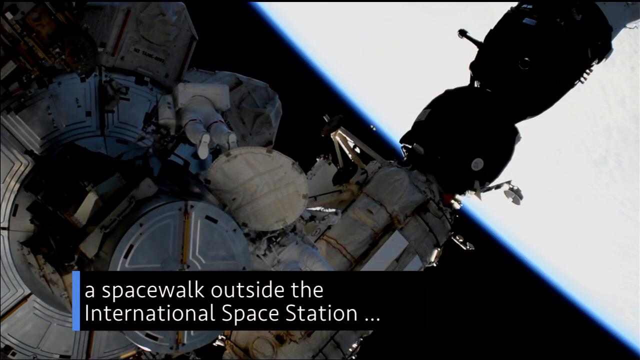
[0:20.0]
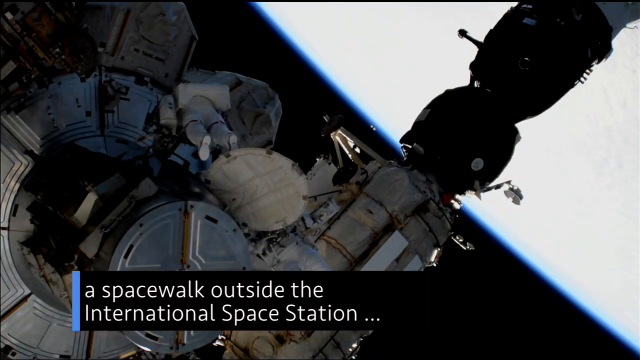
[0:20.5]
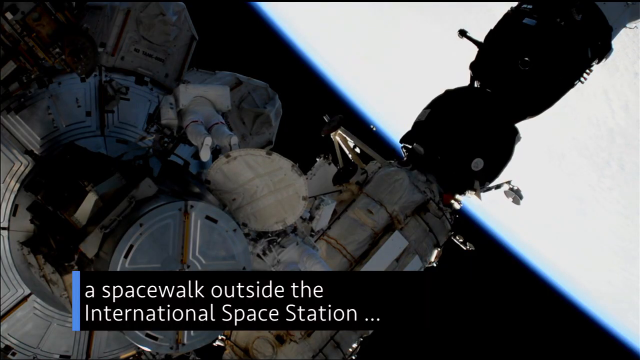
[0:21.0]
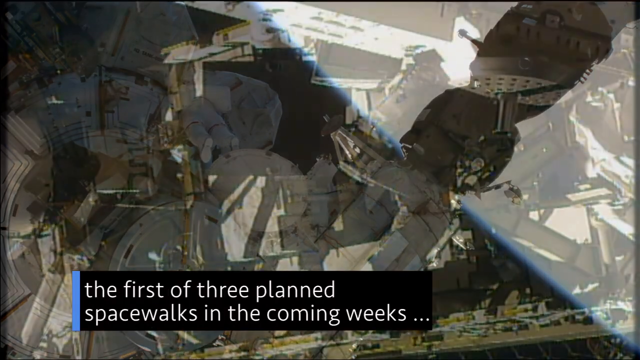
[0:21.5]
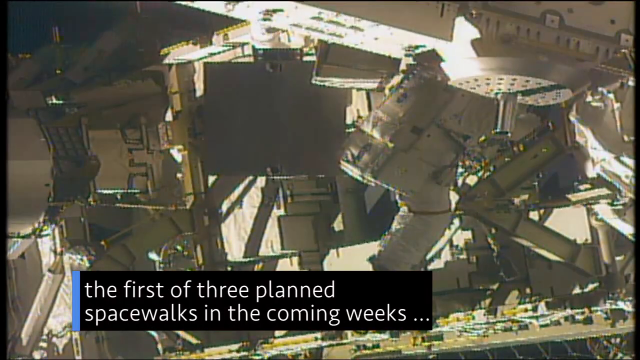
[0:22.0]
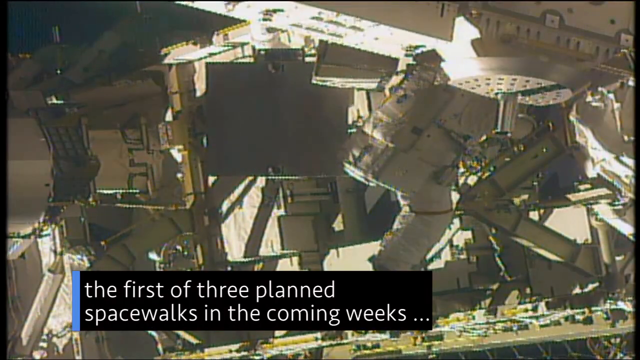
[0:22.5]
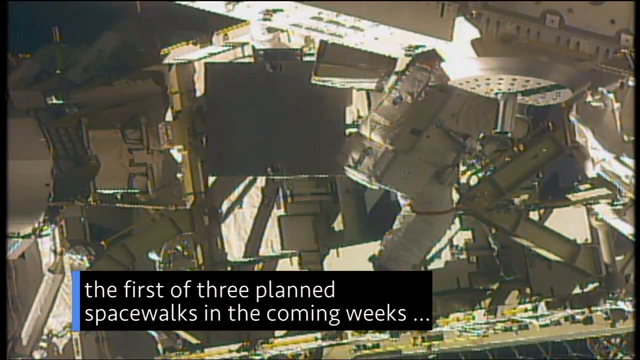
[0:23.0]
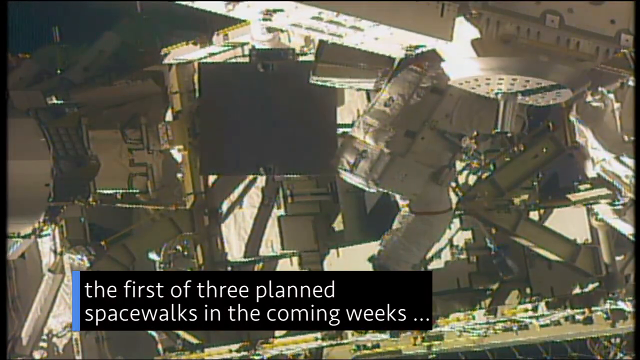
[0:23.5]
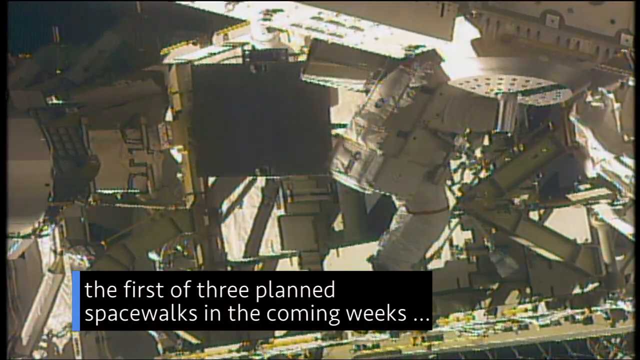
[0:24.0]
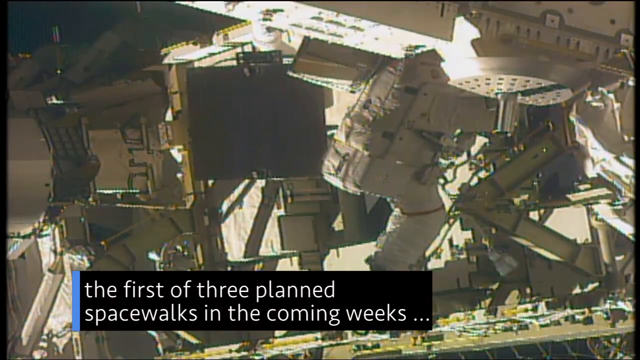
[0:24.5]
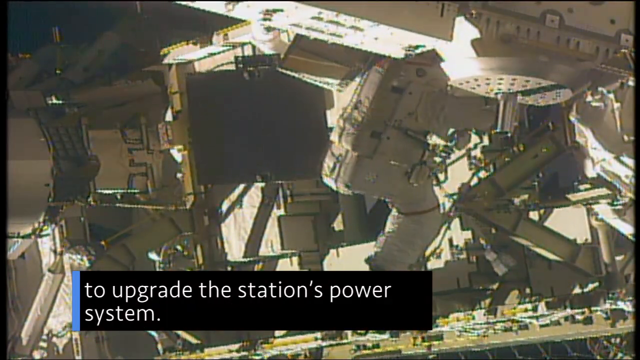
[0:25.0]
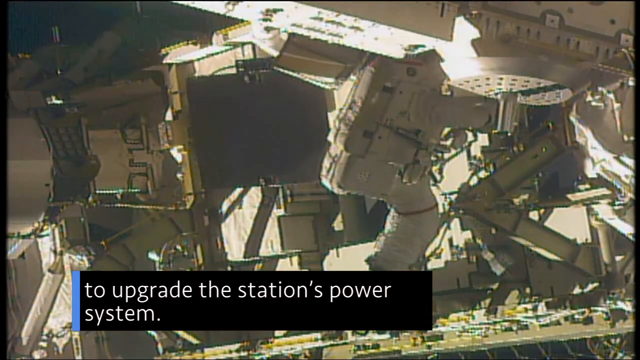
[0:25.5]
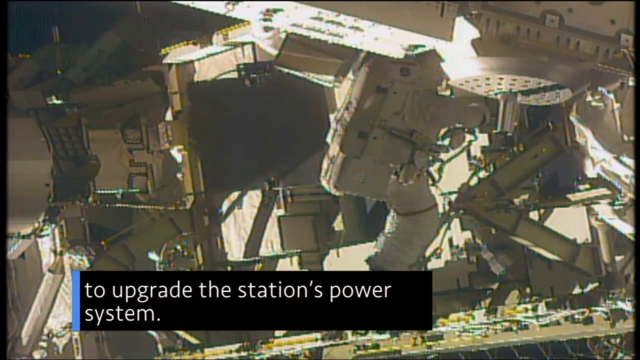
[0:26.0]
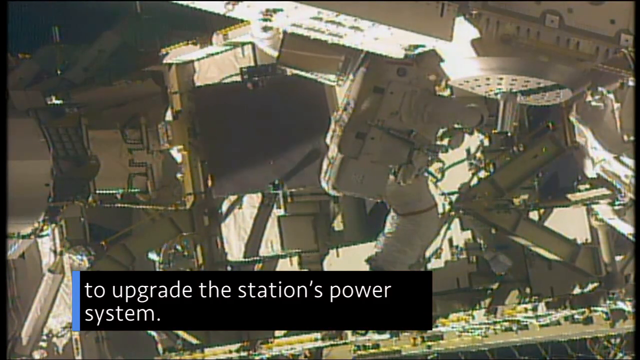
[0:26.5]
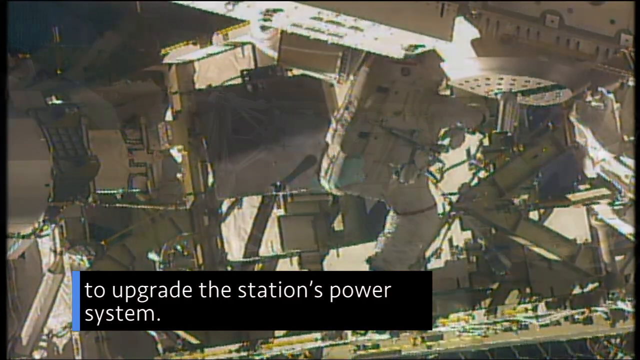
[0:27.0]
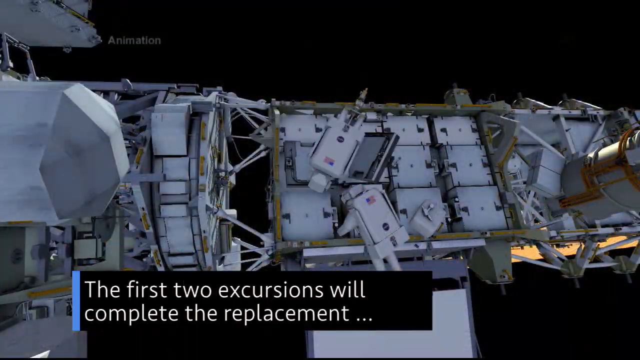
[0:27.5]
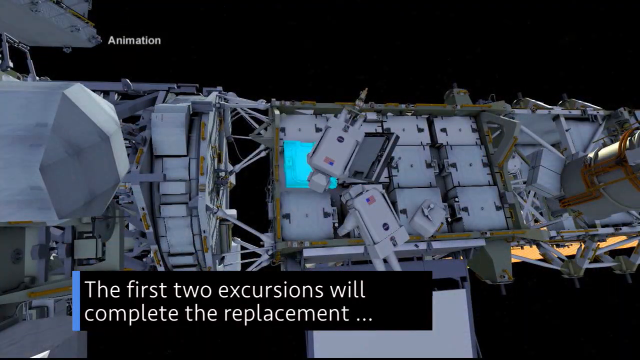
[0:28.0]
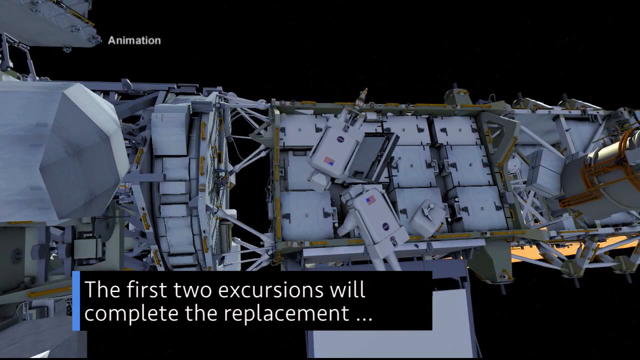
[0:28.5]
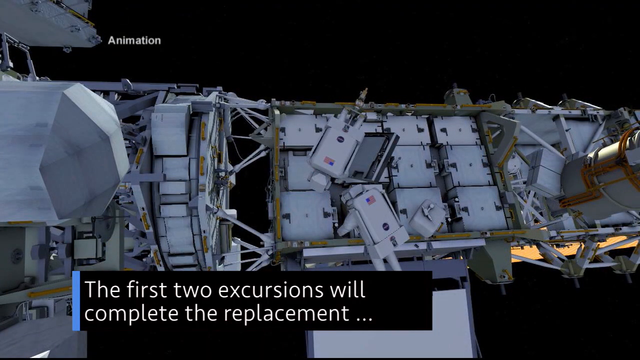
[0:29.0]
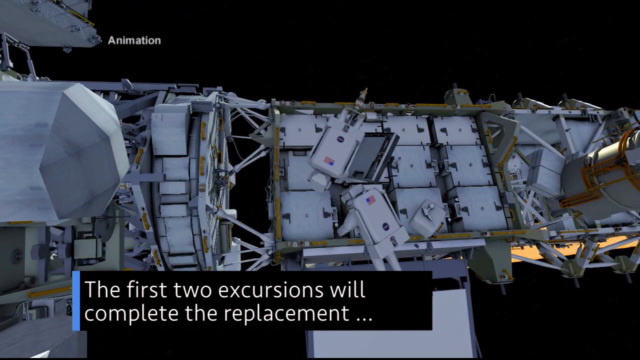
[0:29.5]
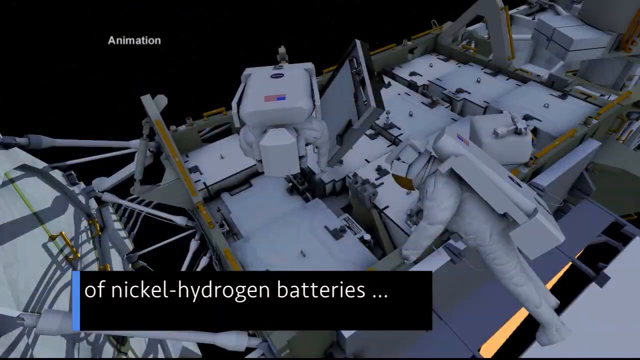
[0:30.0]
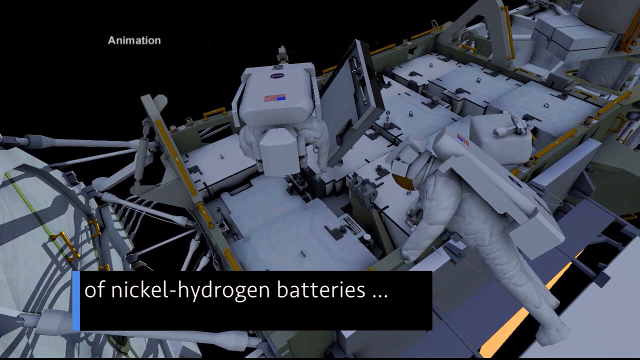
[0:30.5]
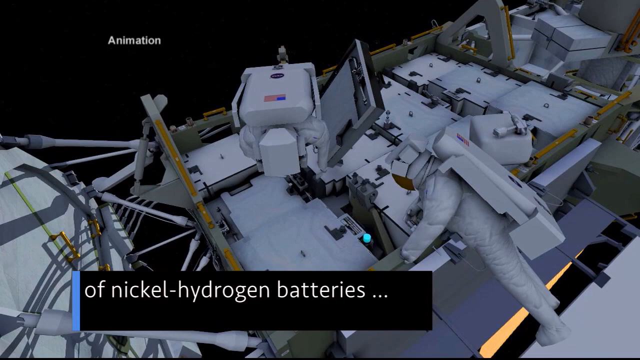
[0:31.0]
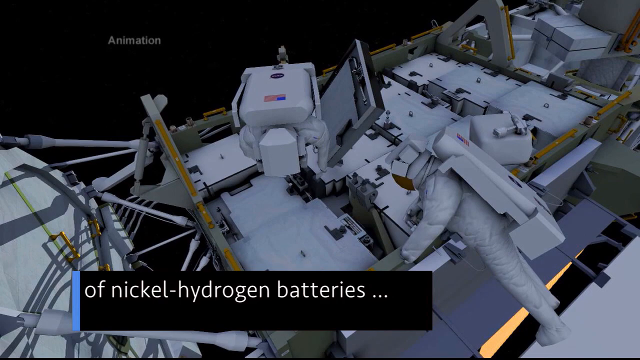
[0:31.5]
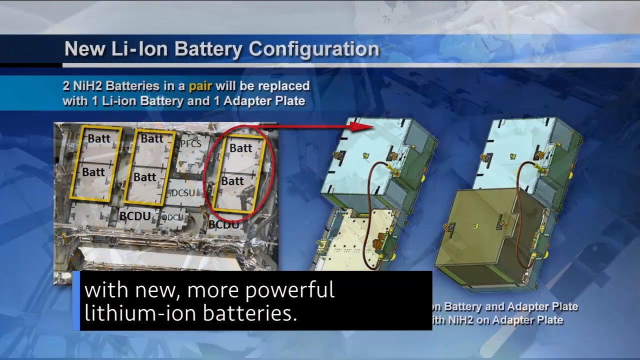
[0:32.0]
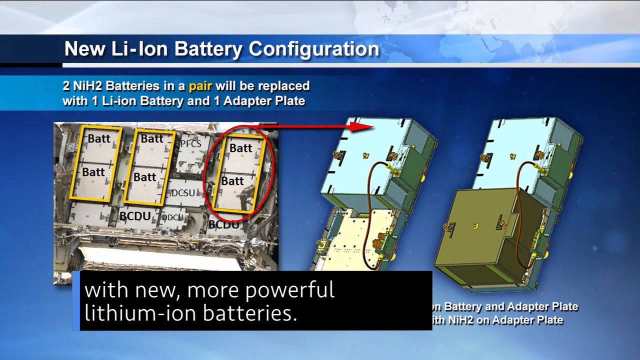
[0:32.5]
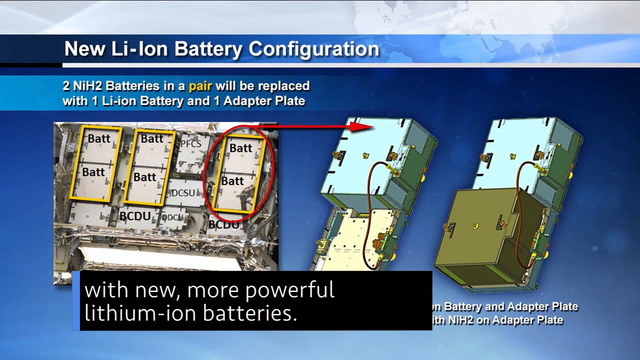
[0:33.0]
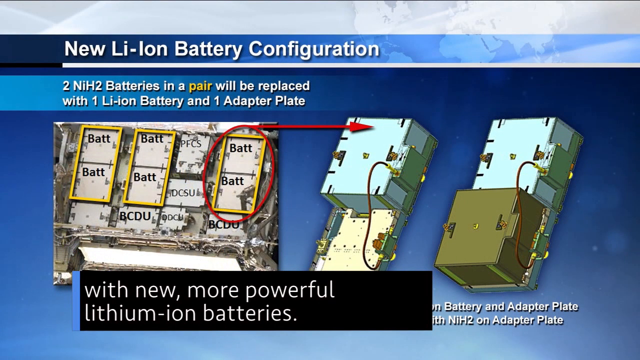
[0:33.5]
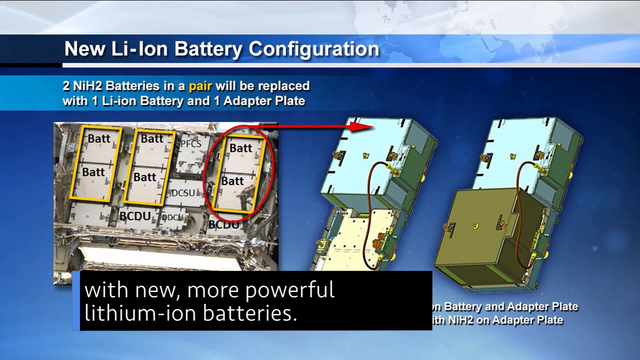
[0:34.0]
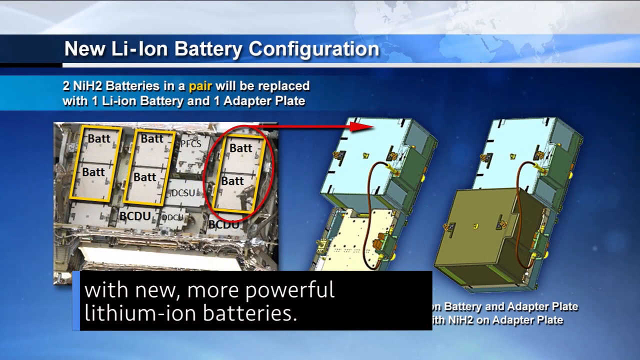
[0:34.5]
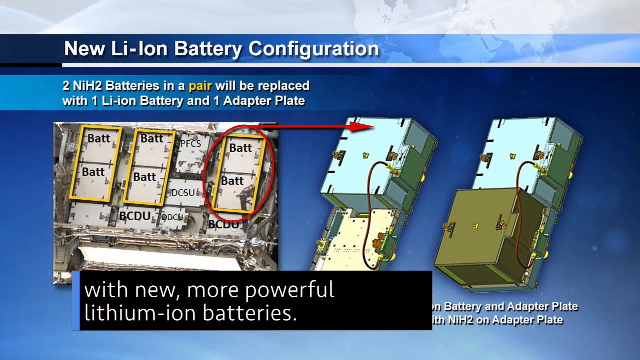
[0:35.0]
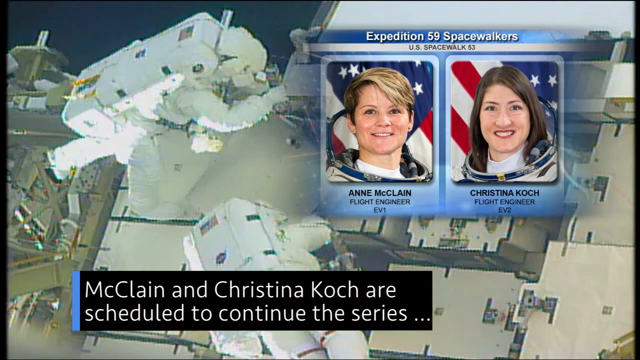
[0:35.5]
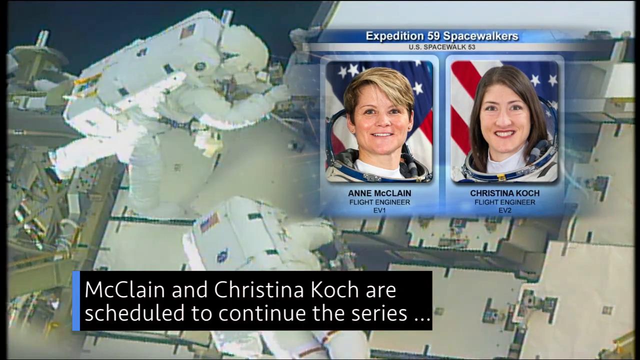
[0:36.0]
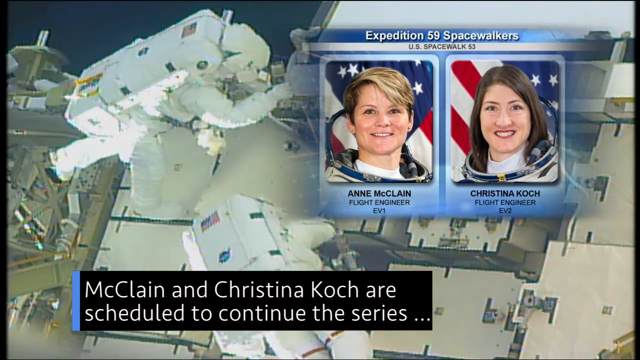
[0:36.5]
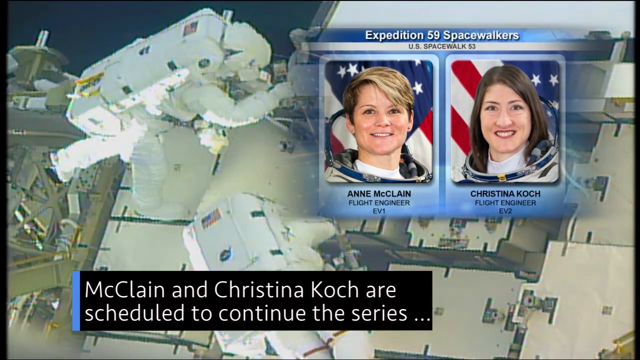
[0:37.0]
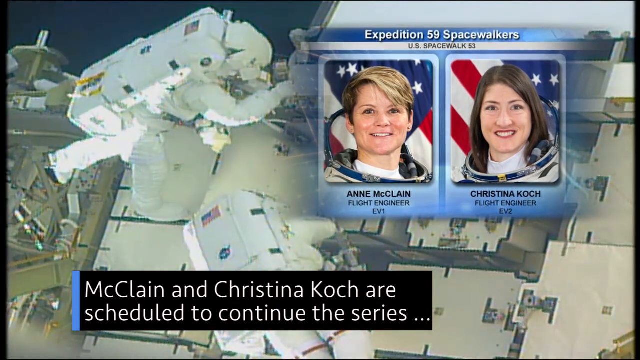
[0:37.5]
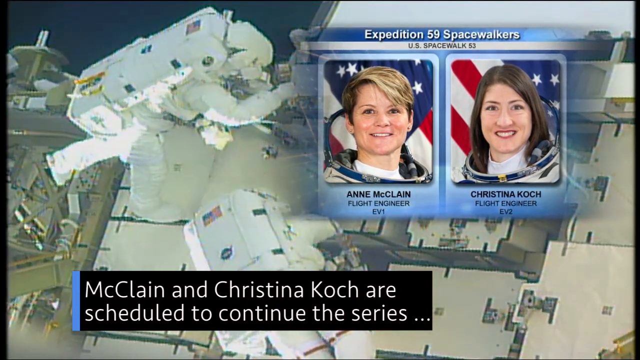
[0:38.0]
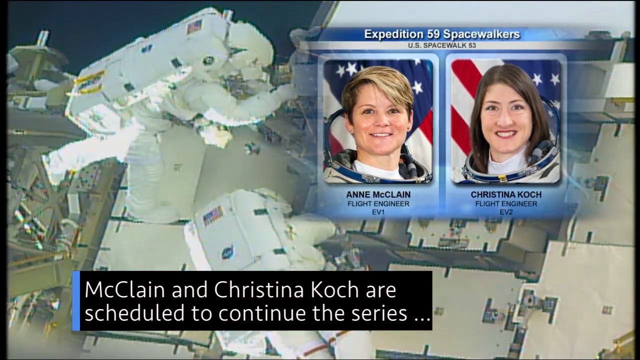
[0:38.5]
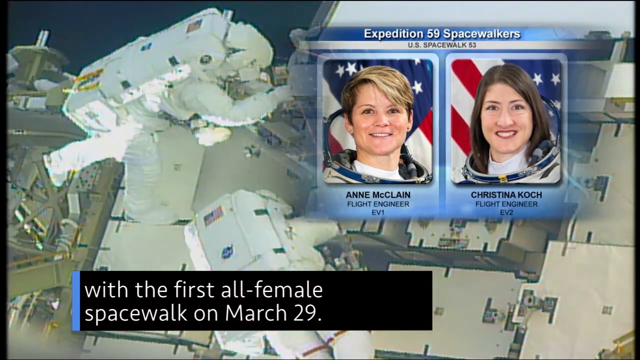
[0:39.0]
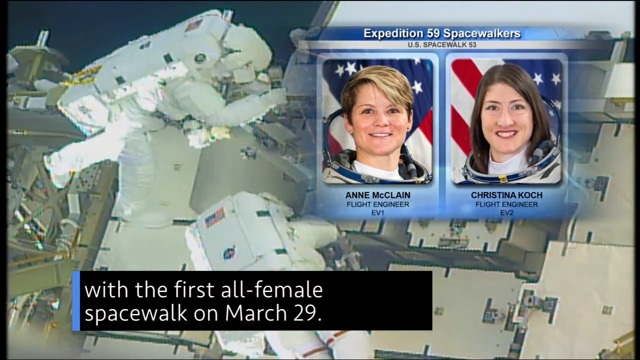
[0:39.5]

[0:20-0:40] Text at the bottom of the screen reads "the first of three planned spacewalks in the coming weeks." In the very center of the screen, a box-like machine moves around outside the space station. The scene is an animation, as text in the upper left corner says. Text says the spacewalkers are checking and inspecting the nickel hydrogen batteries. Two spacemen are shown working on the station, one on the right and one in the center, and they look like they have large square packs on their backs. Anne McClain and Christina Koch, both flight engineers, are on the space station. Text says "McClain and Christina Koch are scheduled to continue the series," referring to Expedition 59 spacewalkers, apparently the first complete female crew to do space station repairs.